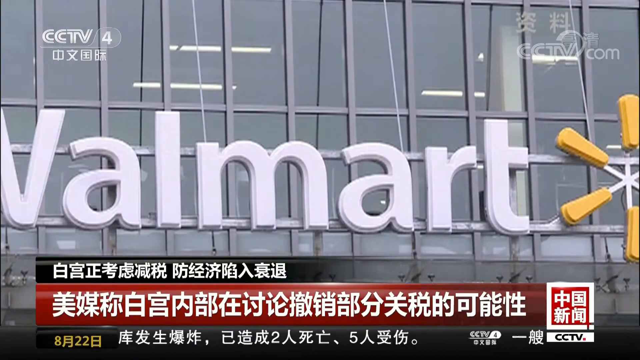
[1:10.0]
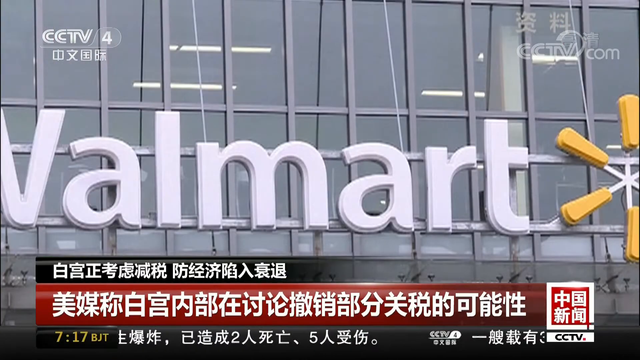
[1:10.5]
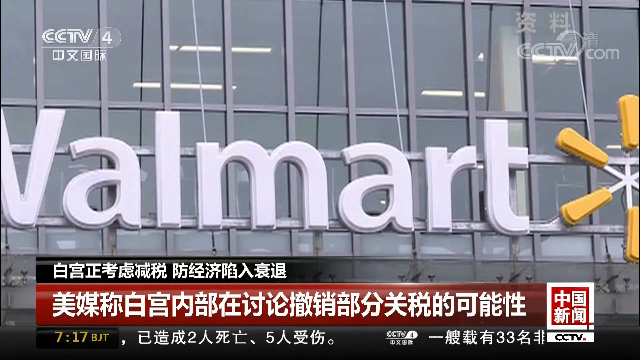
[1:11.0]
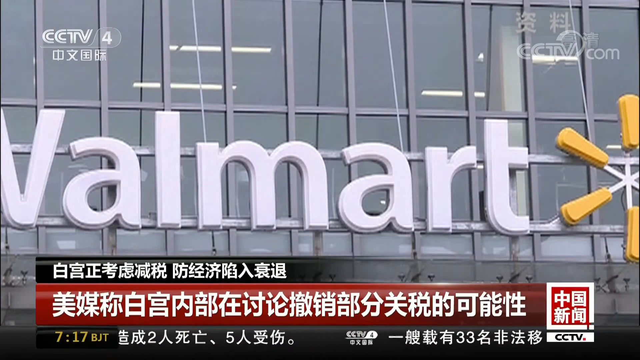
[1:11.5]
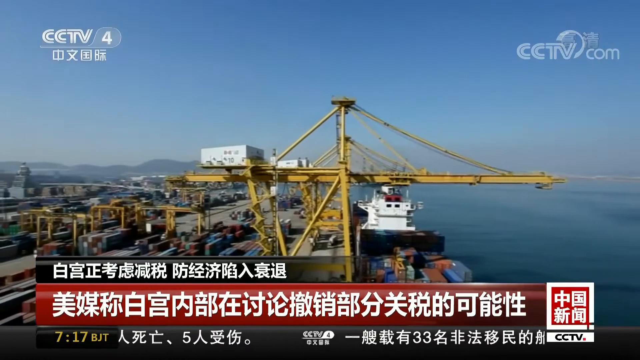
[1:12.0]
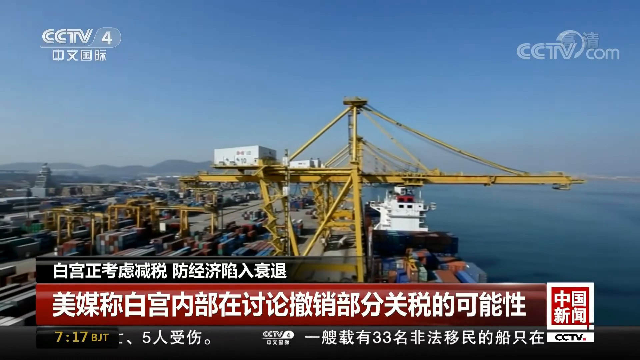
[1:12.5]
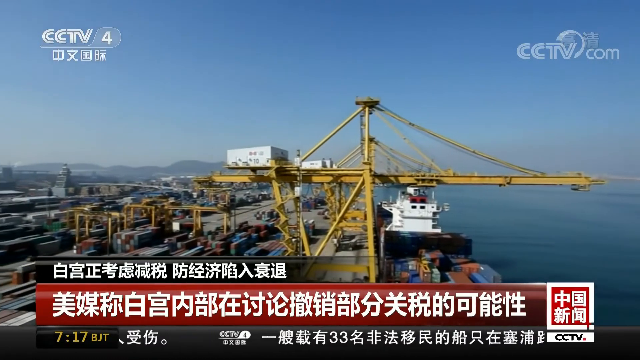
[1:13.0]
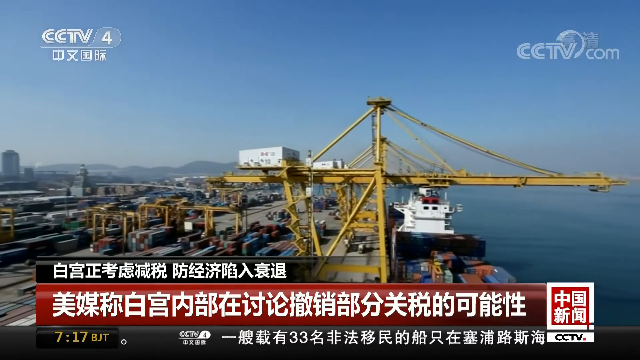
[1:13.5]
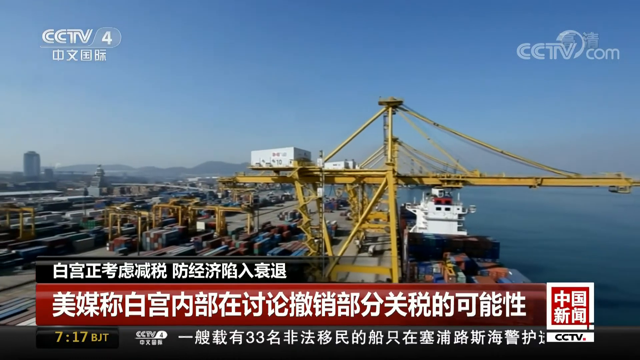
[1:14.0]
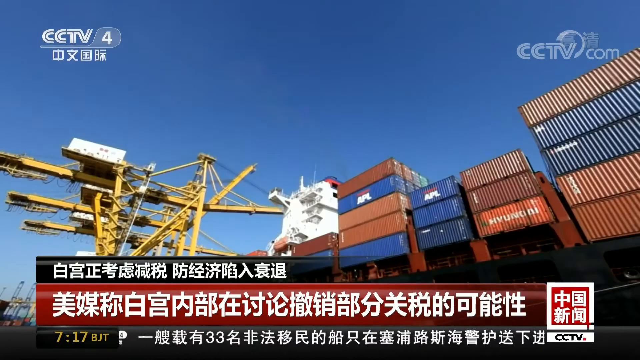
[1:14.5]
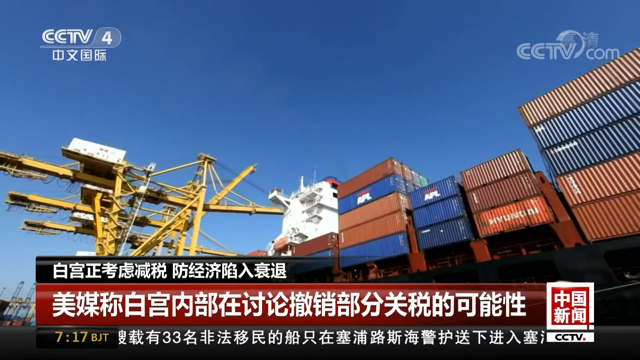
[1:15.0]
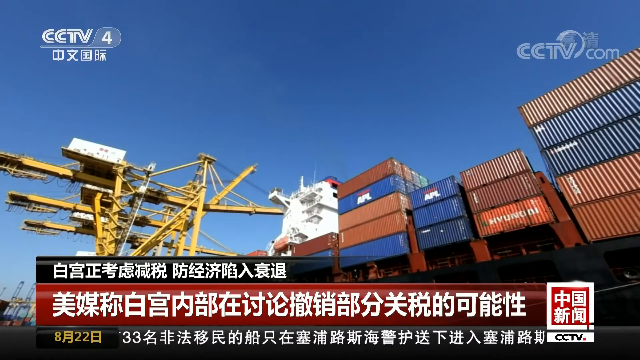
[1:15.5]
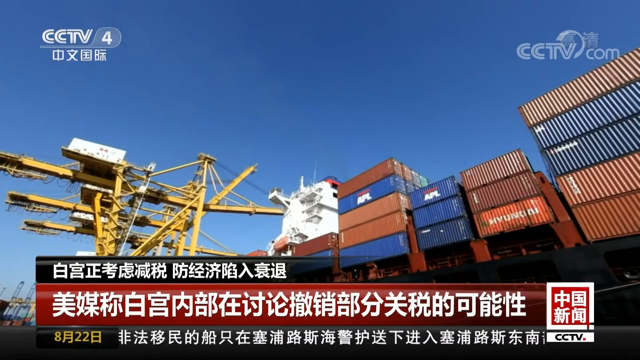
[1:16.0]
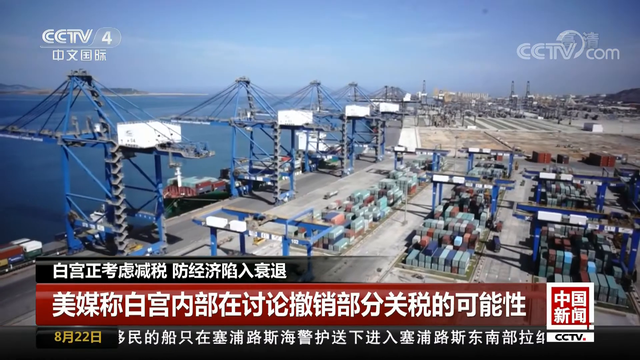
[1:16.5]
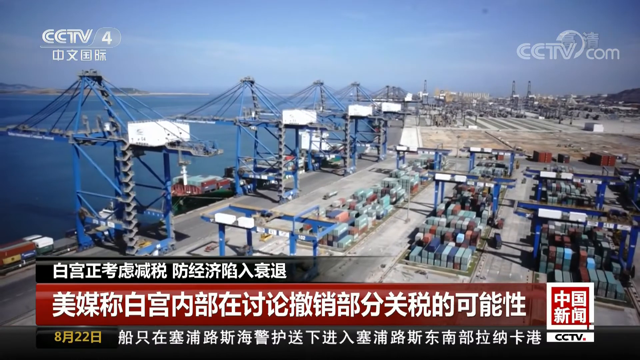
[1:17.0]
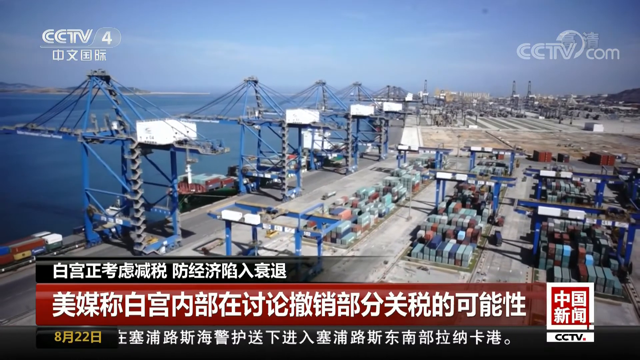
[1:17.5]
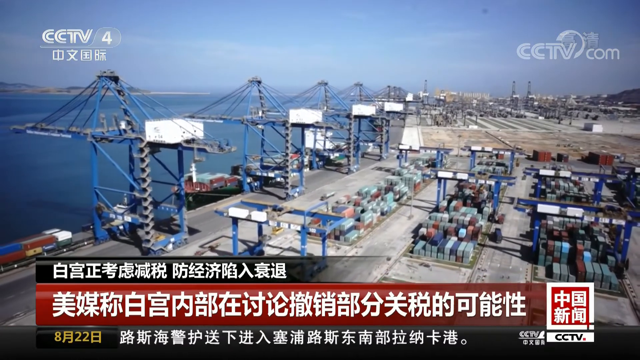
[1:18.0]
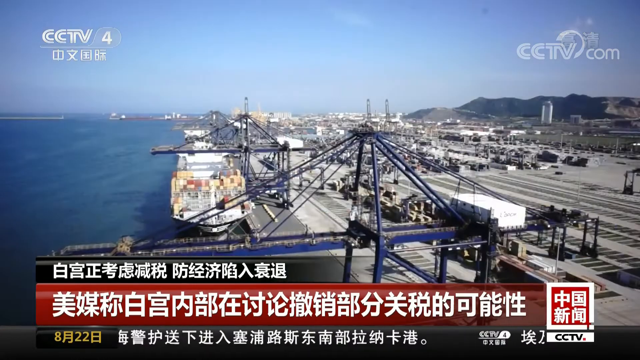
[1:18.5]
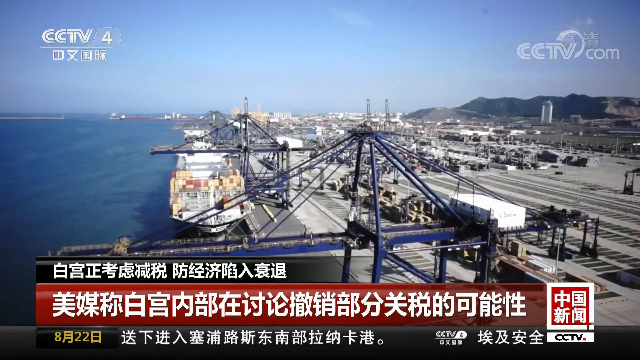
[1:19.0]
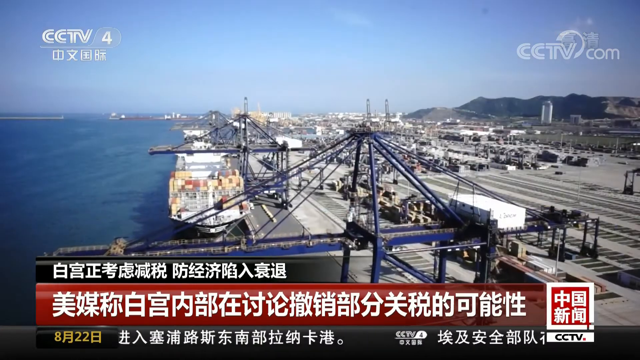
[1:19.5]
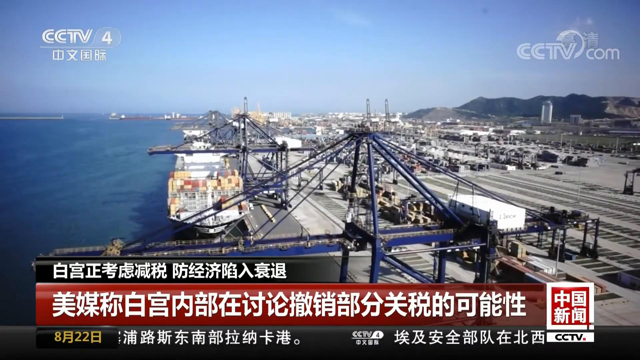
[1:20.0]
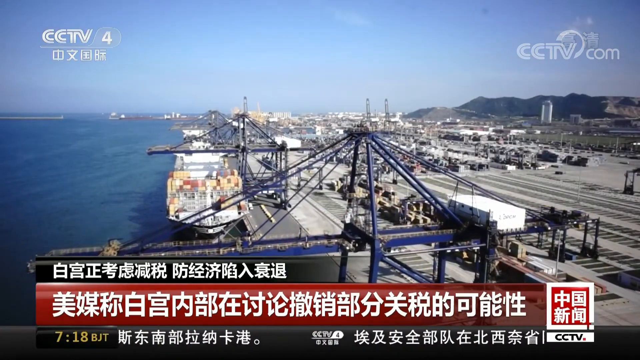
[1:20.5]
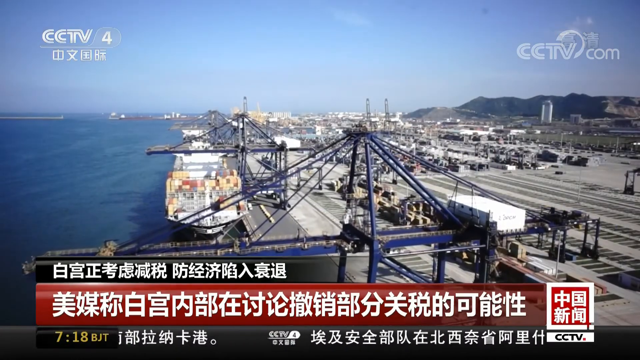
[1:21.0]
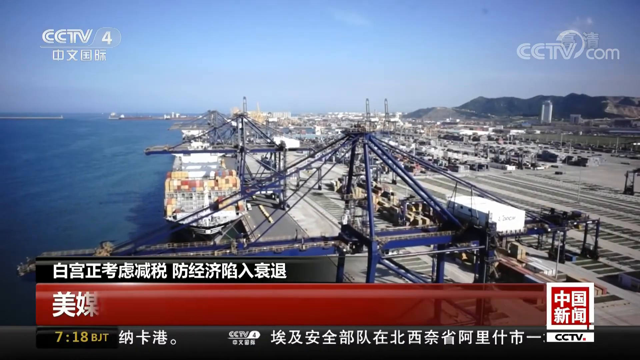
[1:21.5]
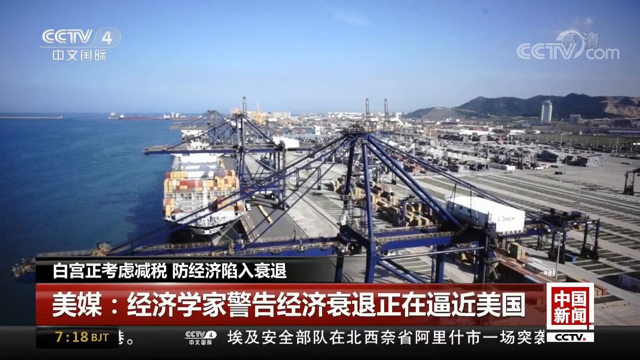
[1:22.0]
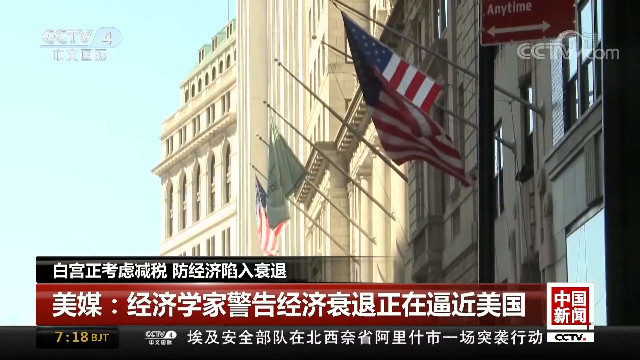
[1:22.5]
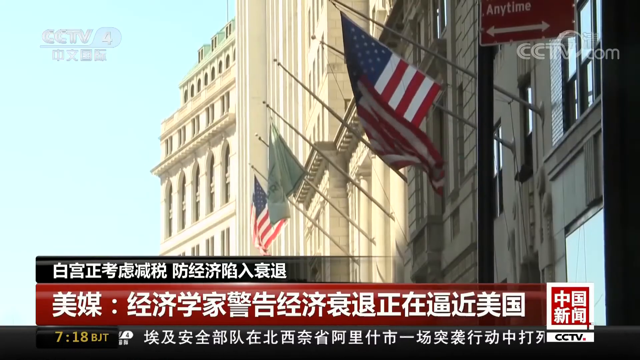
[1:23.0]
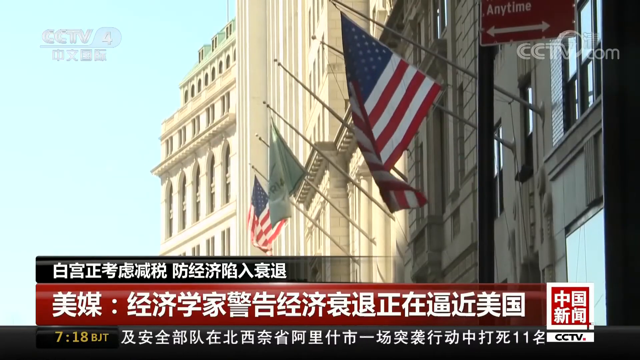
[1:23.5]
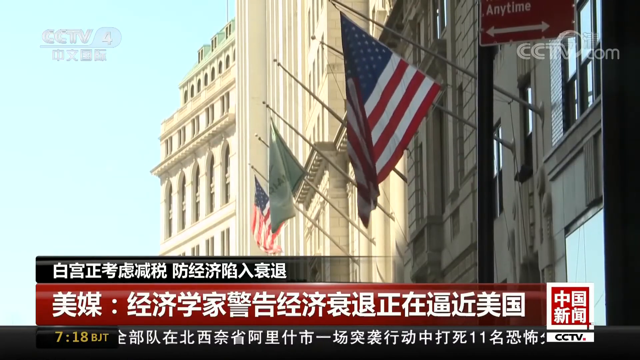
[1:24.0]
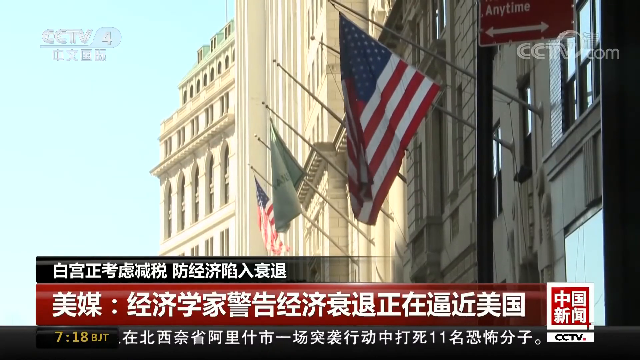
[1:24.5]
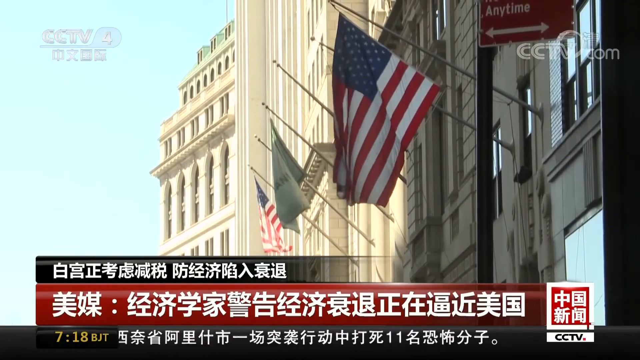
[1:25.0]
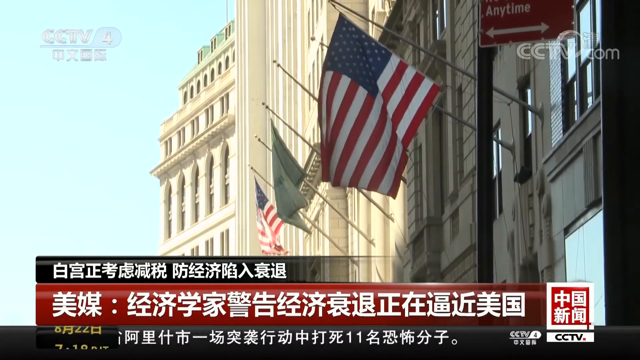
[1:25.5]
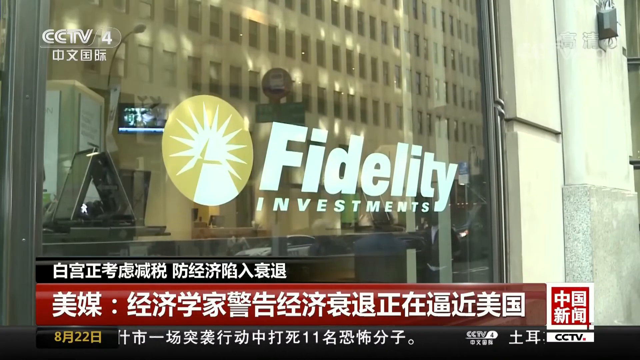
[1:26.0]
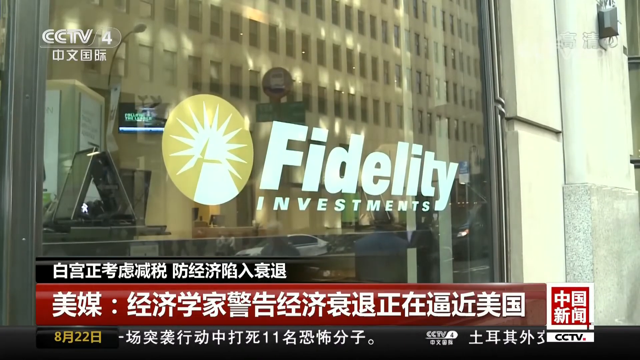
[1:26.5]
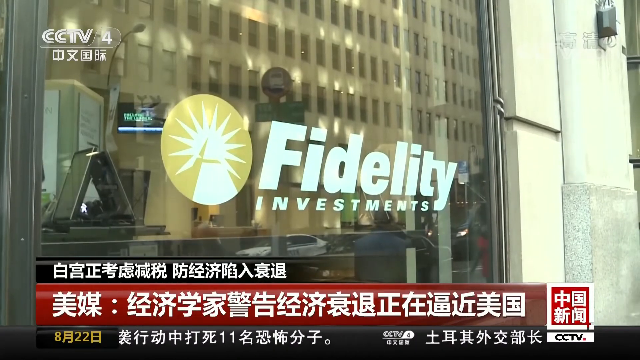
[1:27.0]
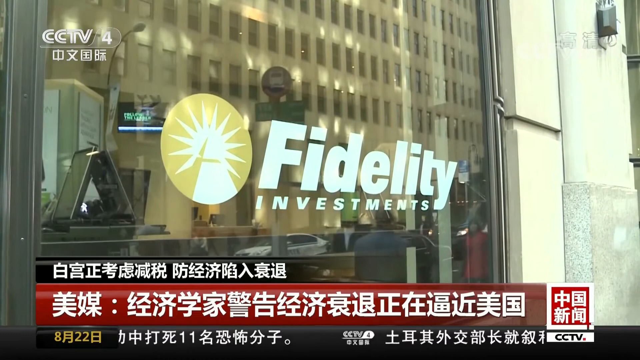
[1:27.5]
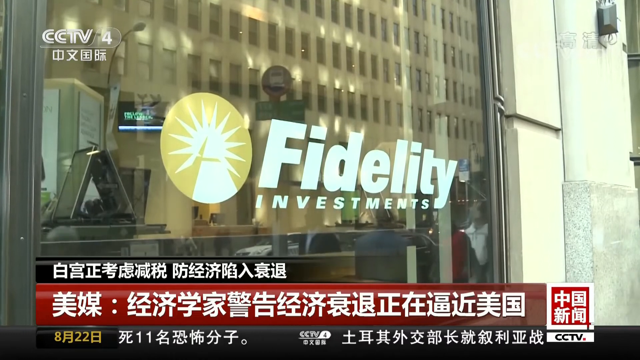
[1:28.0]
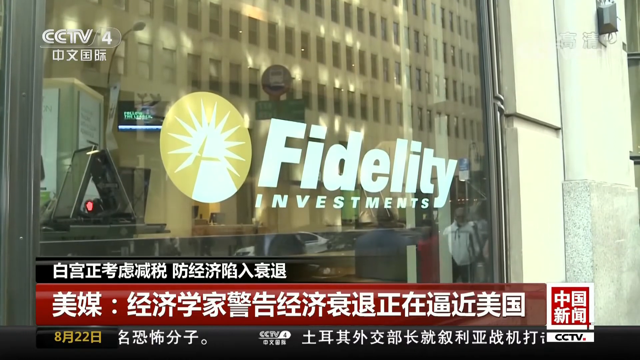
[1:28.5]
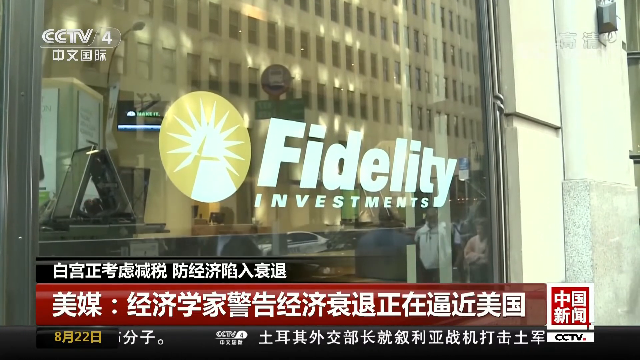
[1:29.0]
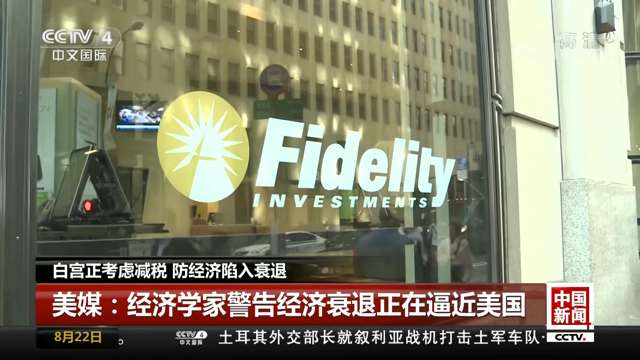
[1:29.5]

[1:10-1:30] The Walmart is shown briefly, then the video cuts to what looks like a shipping dock. On the top left there is a huge body of water, and there is a huge ship carrying a bunch of shipping containers. A bunch of cranes on the dock lift the storage containers up to unload them. The video cuts back to town, showing American flags and another flag that is solid green. It then zooms in on the Fidelity Investments logo. Afterward it cuts to something else that cannot really be seen.